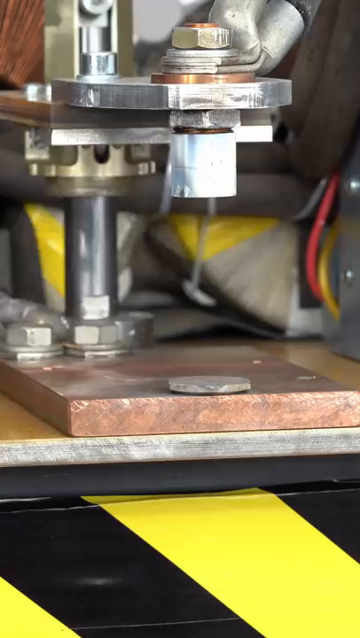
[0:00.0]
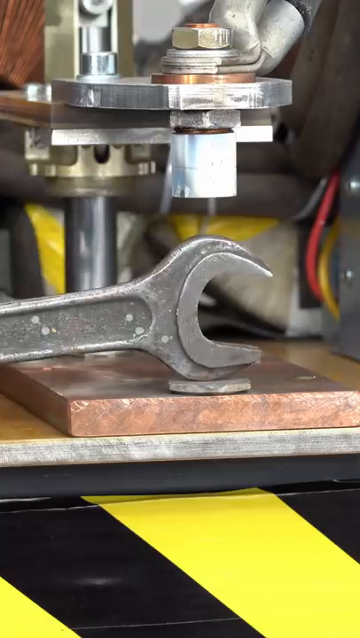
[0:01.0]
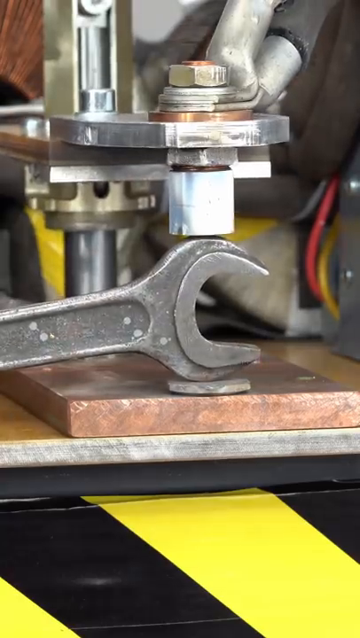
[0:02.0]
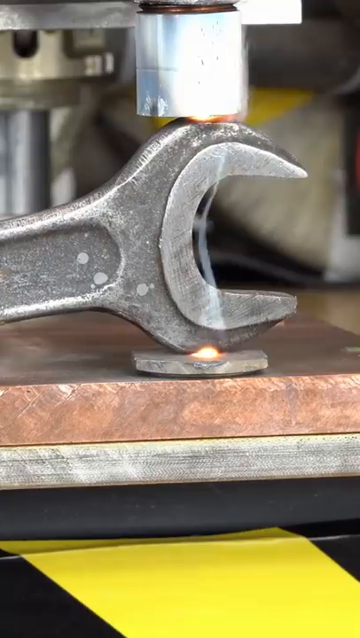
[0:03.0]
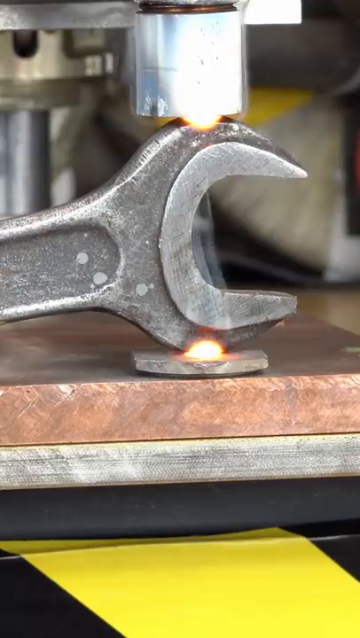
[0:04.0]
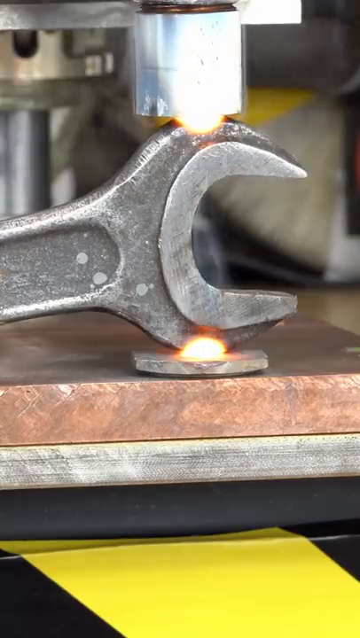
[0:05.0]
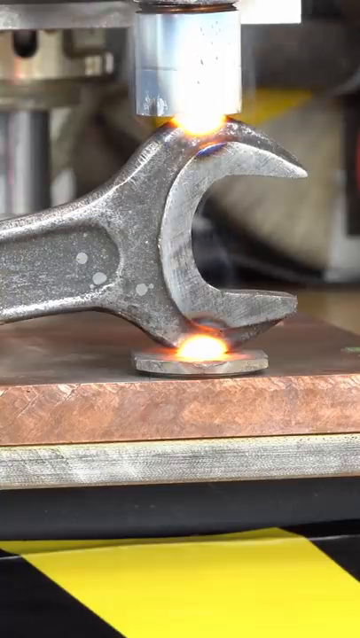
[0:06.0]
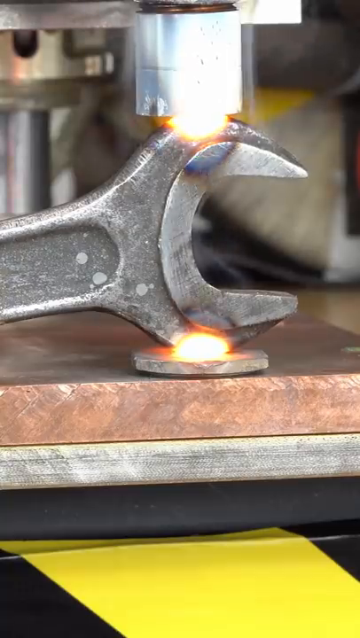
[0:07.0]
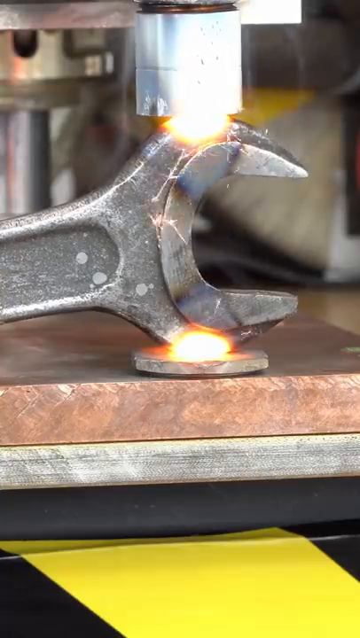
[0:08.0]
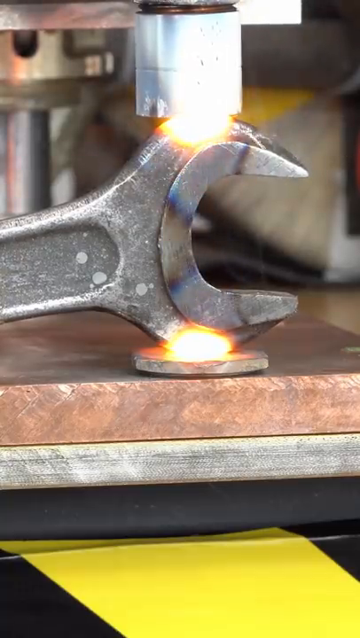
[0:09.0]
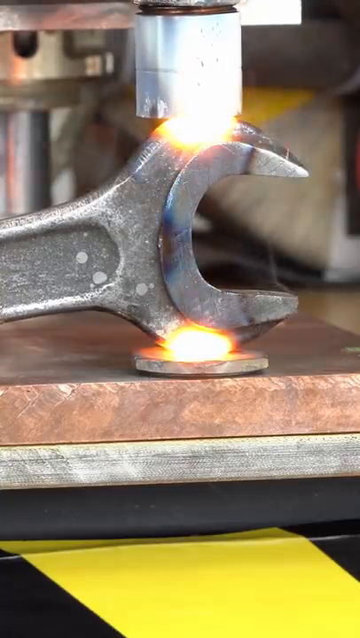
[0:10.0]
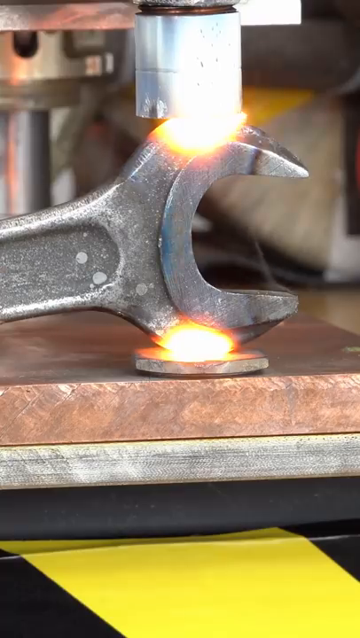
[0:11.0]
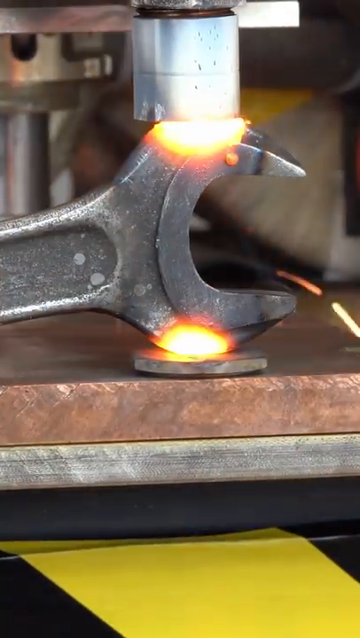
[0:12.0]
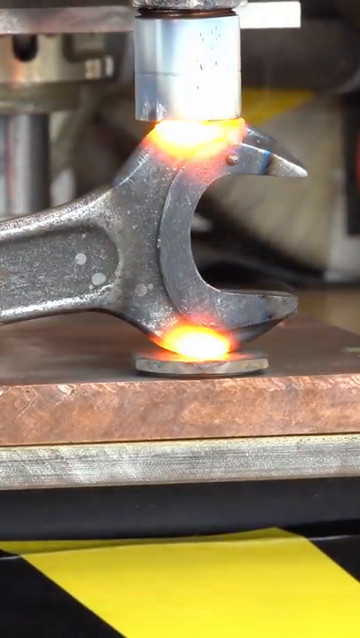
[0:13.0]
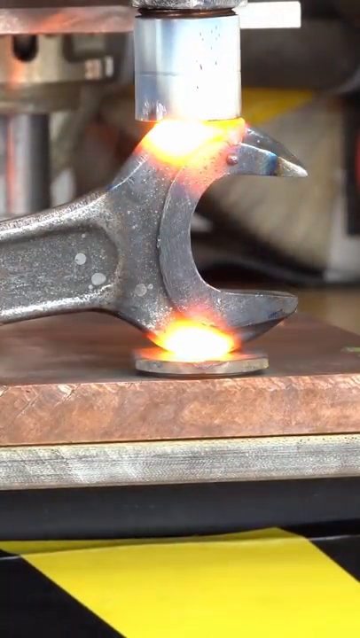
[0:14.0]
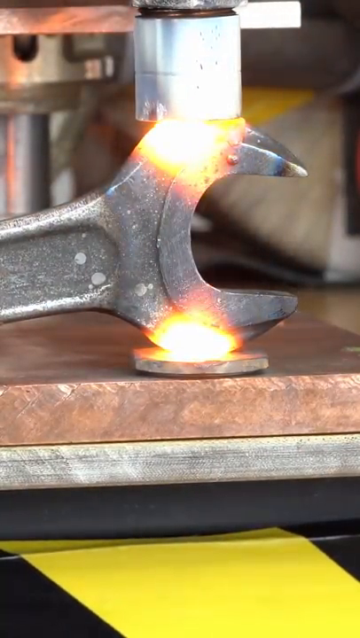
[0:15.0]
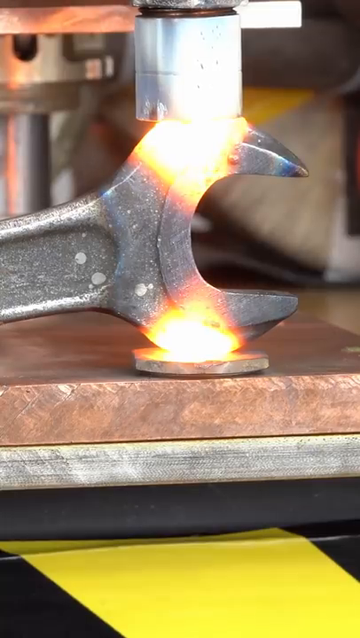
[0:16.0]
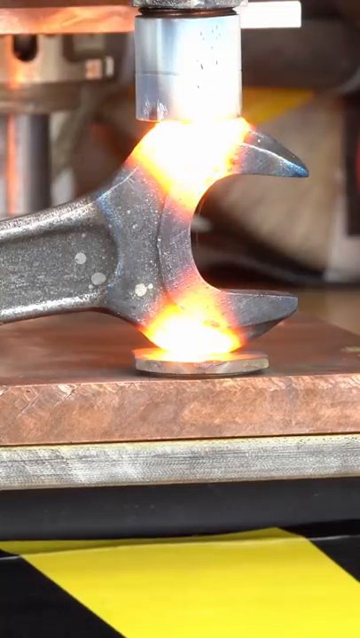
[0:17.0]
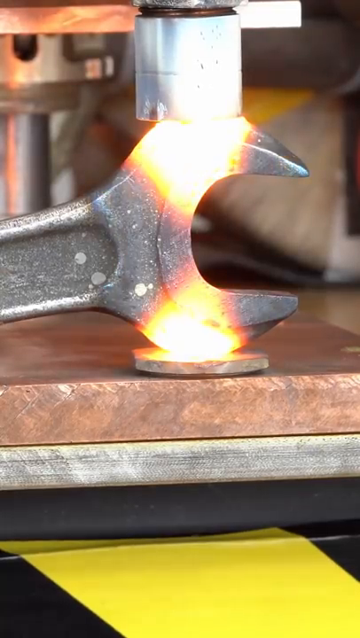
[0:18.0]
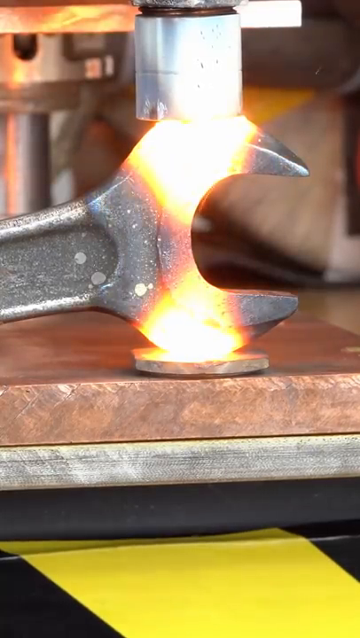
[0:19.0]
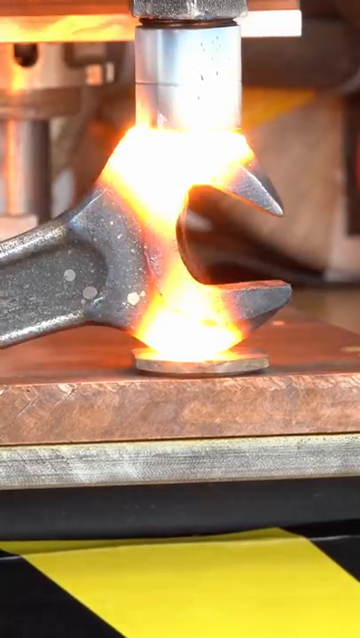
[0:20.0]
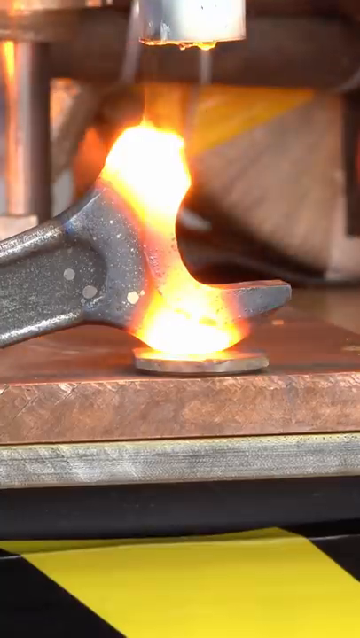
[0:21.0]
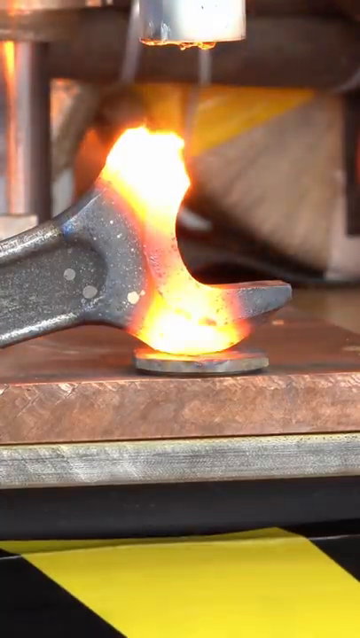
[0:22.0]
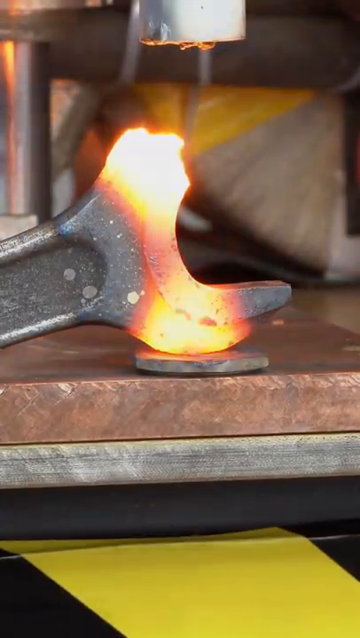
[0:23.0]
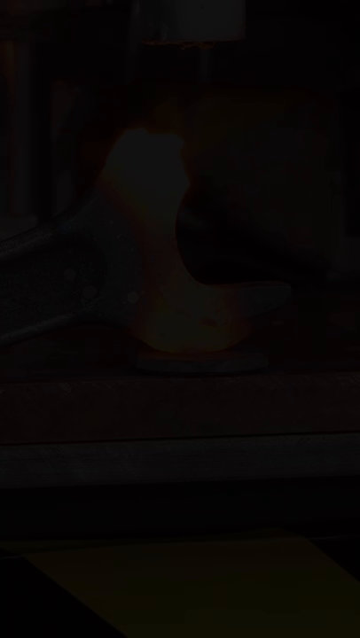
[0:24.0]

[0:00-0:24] A wrench is shown while someone uses a tool to kind of burn it, and the wrench gradually changes colors and starts to light on fire. The tool presses down against the wrench, kind of like a hydraulic press, and flames are visible on the bottom and top. The wrench turns orange and yellow, almost as if it is melting, and gradually gets more and more yellow until the top part of the wrench snaps and falls off towards the side. In the end, the handle of the wrench remains black while the functional part of the wrench is yellow and orange, sitting on a brown table.